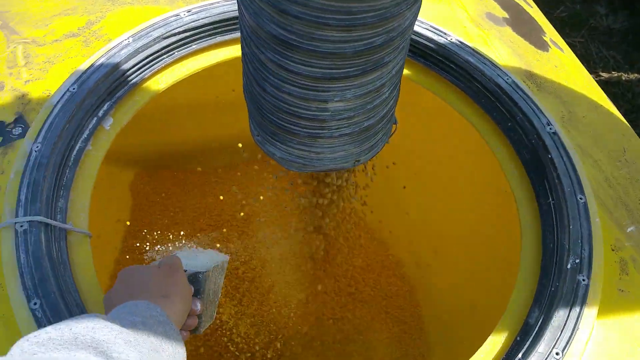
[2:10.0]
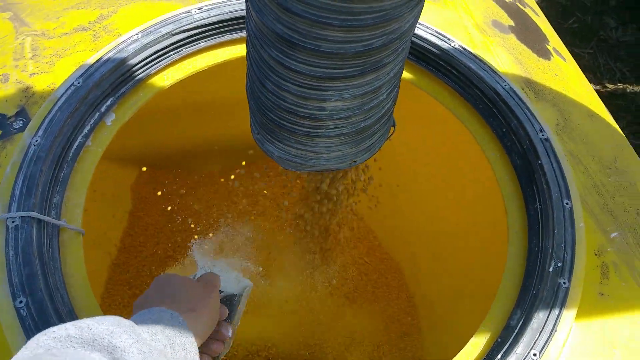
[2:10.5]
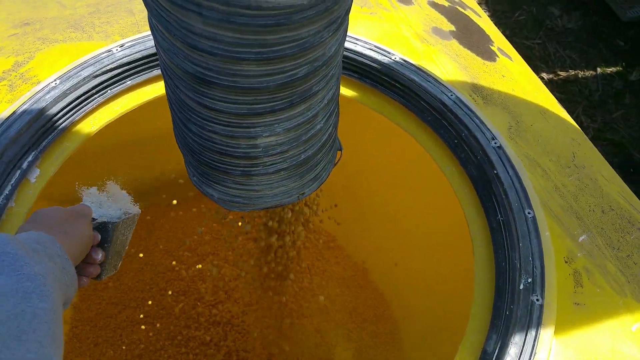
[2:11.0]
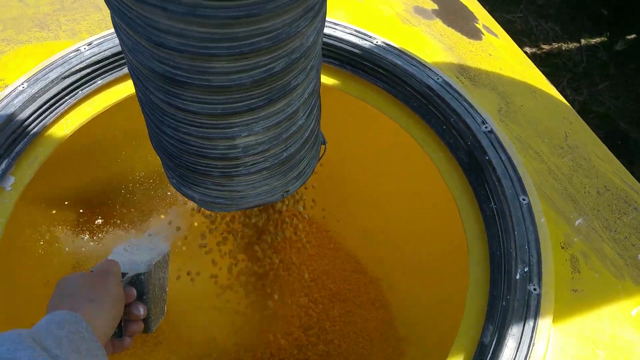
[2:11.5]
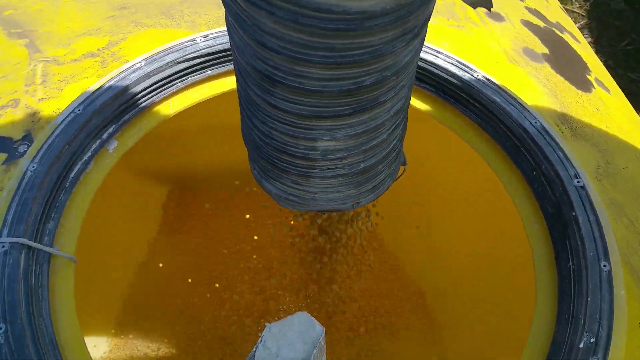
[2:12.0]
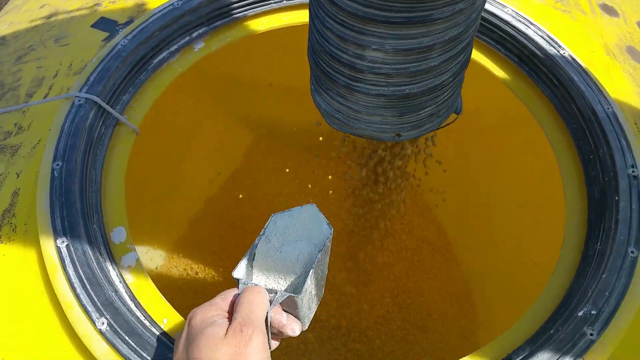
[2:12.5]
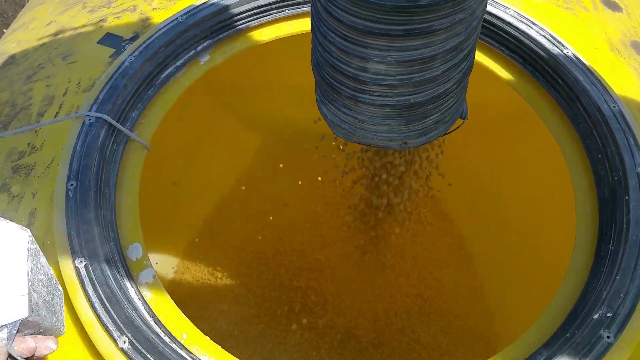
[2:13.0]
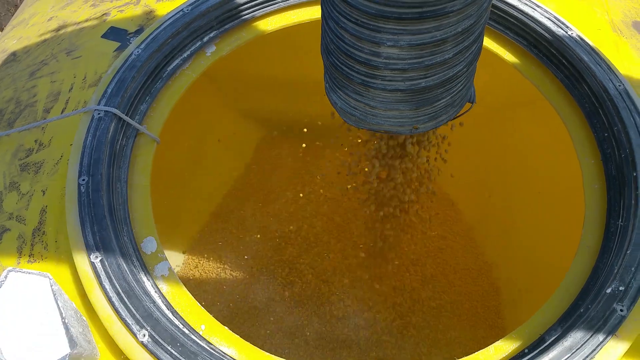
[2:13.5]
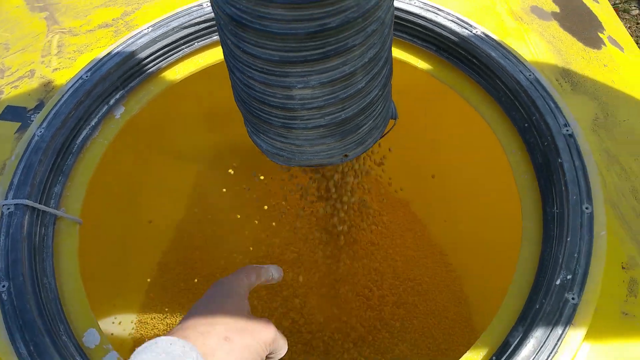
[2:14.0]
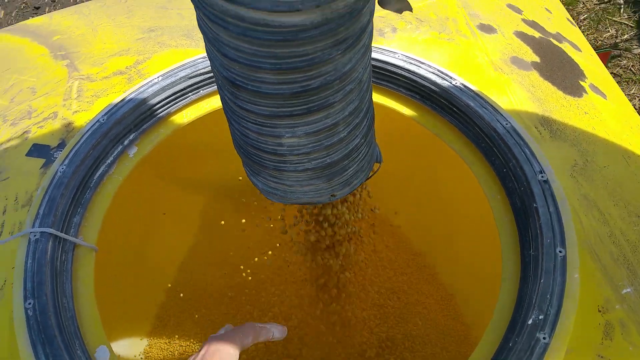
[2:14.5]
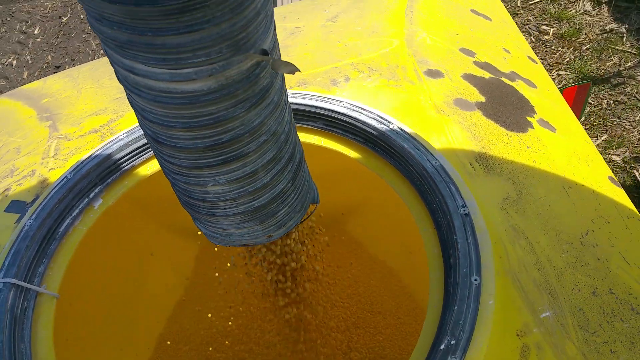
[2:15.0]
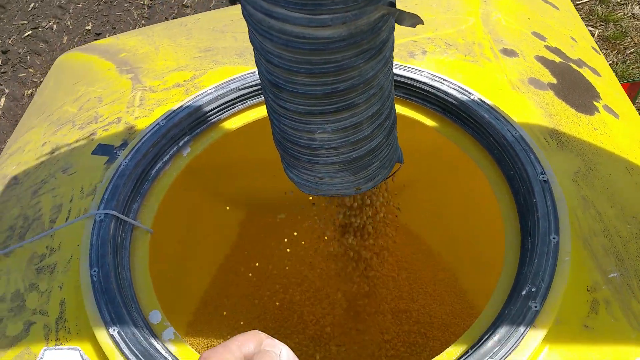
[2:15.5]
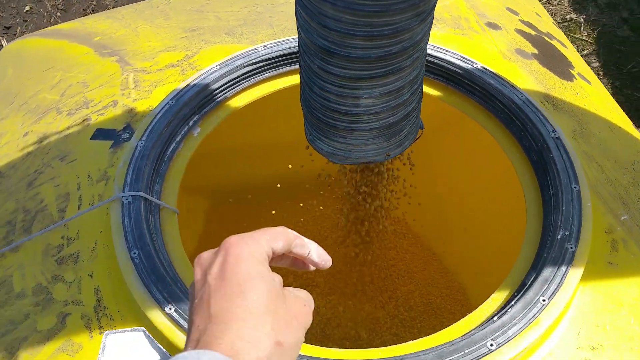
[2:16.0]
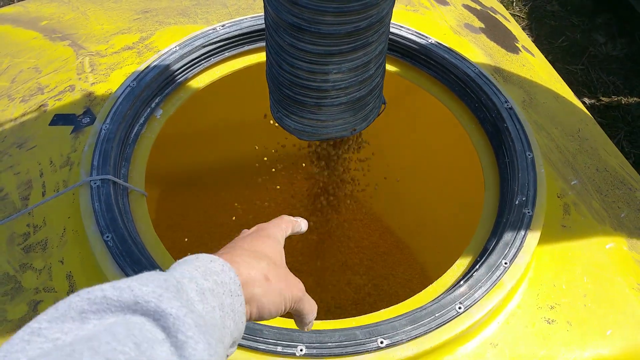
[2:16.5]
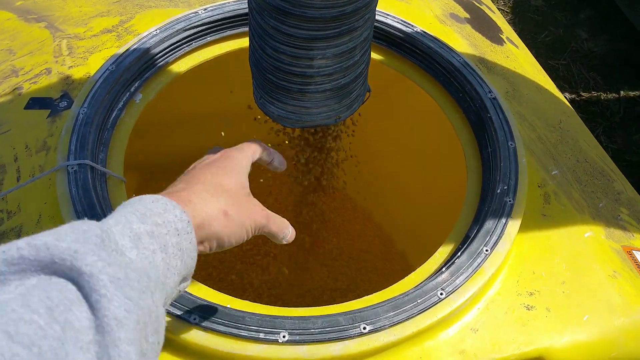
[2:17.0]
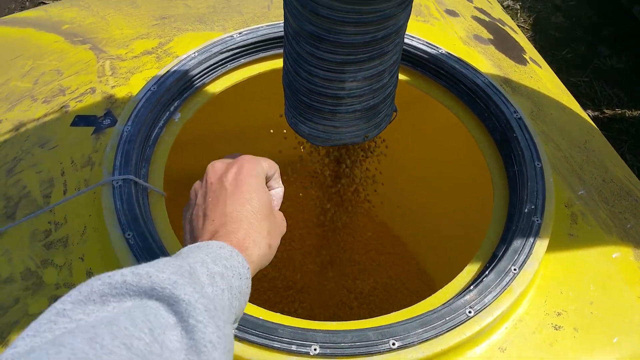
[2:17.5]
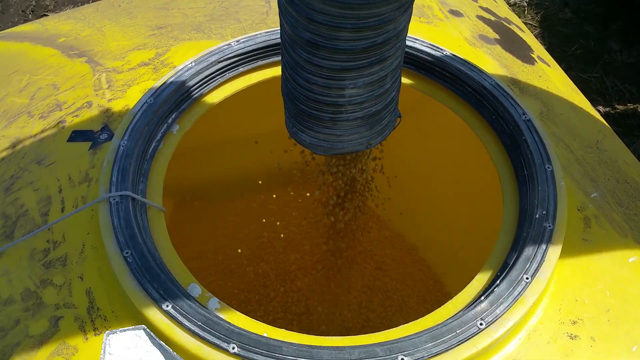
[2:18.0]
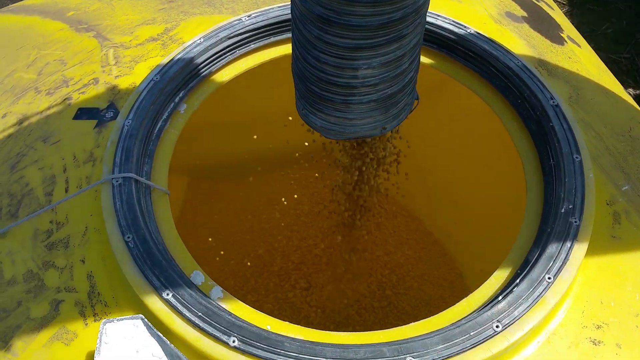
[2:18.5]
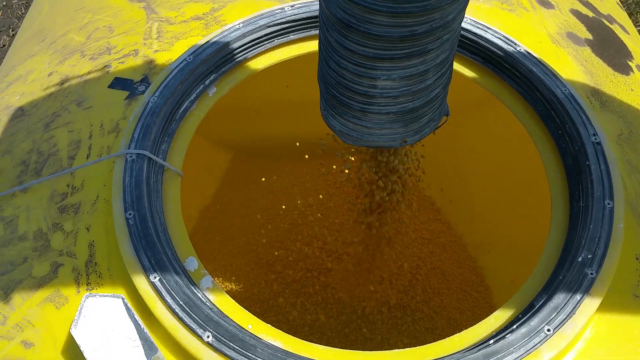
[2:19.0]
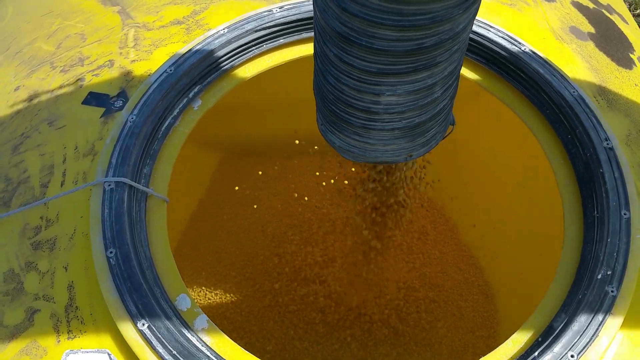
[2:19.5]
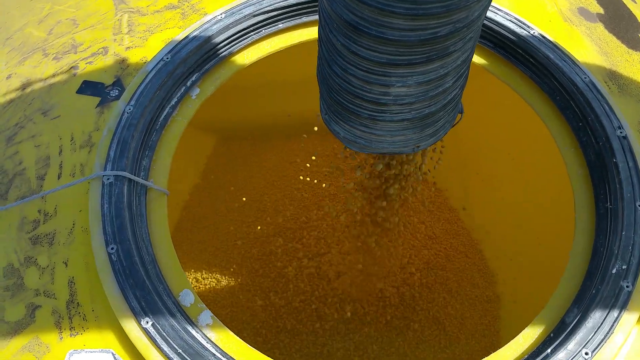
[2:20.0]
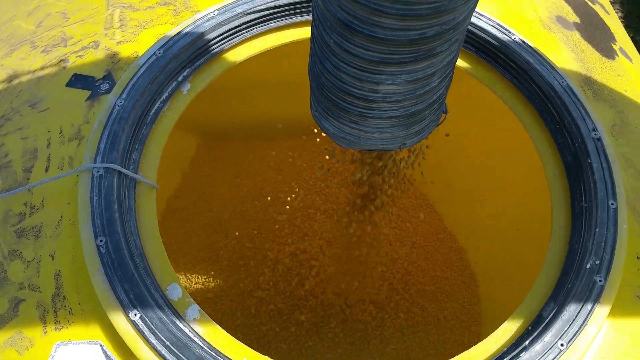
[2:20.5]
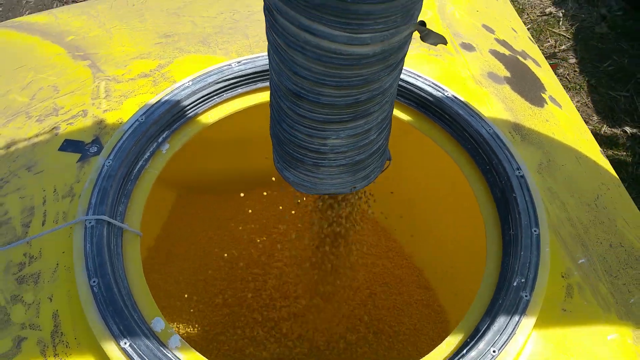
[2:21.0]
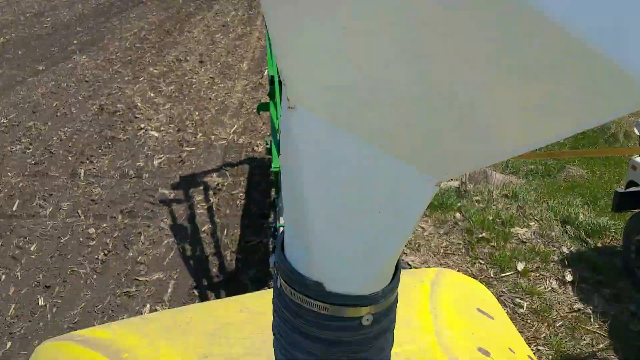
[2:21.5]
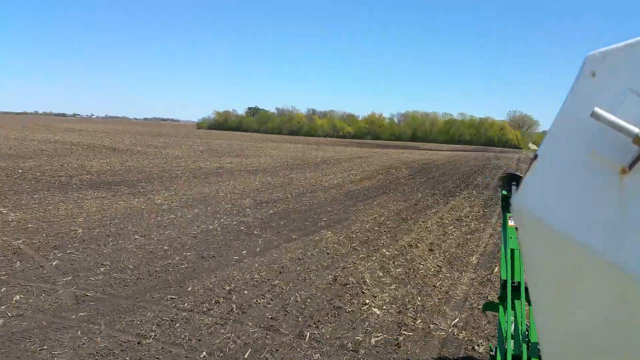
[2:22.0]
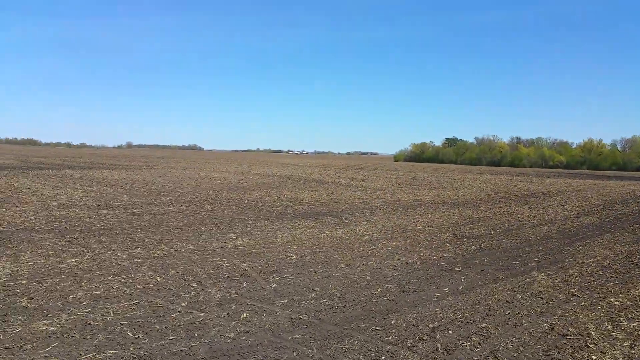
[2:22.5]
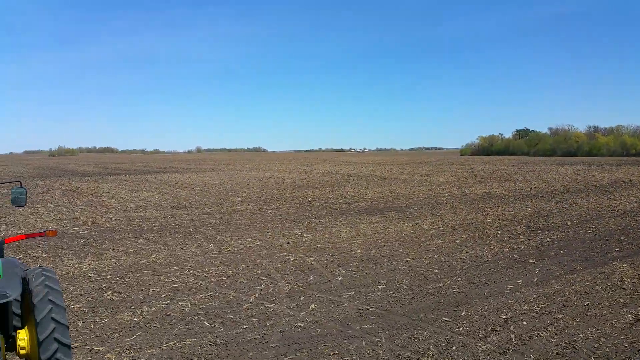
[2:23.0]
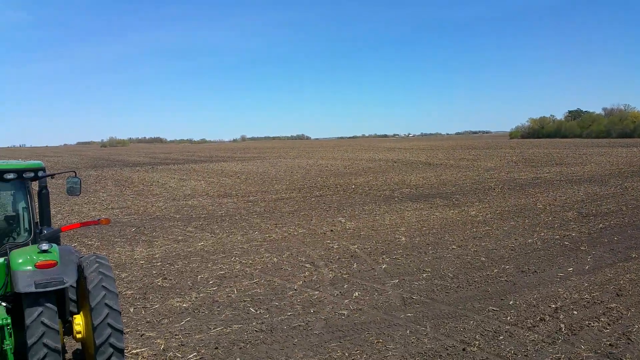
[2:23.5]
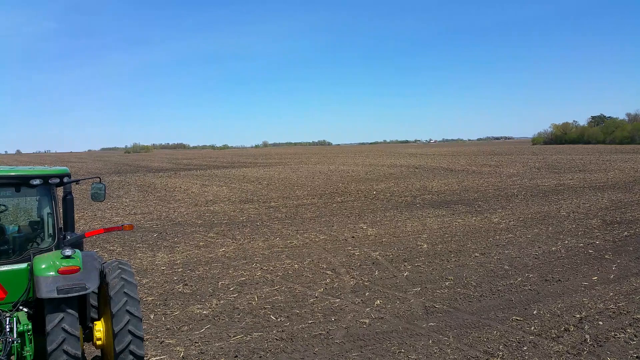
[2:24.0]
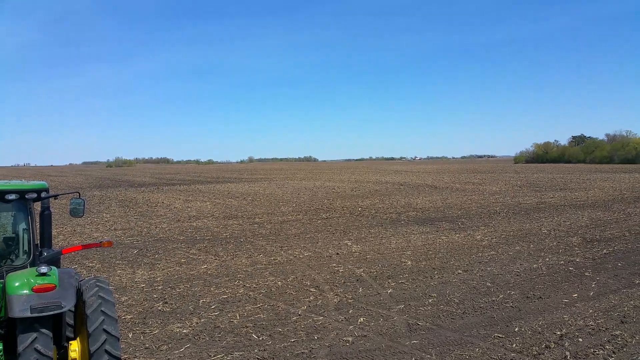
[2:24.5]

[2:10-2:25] The man behind the camera pours white powder into the yellow container, into which seed is pouring from the feeder connected to the truck. He sprinkles the white powder into the bottom, places the scoop on top of the yellow container, and makes a hand motion that looks like he is trying to get the last of the powder on his hands into the container. The feeder keeps pouring yellow and orange seeds into the yellow container, which is still filling up at the bottom. The camera then points back to the open field, which looks empty with just brown dirt. It looks very flat, with tire tracks on it, probably from the agricultural planters. Foliage is visible in the distance, and the sky is clear with few clouds.